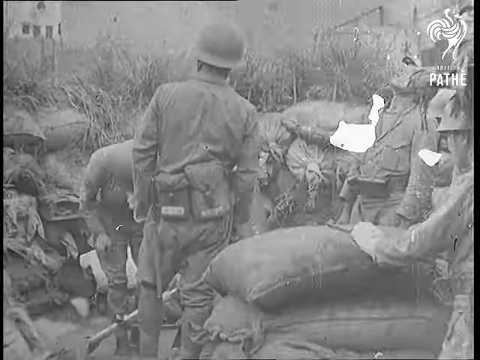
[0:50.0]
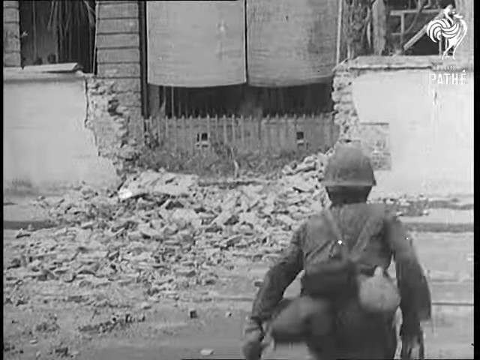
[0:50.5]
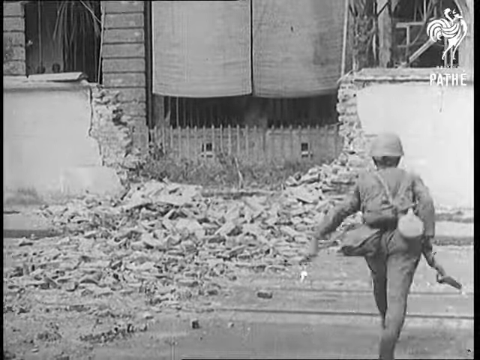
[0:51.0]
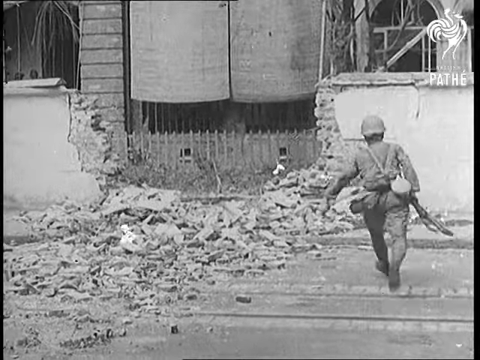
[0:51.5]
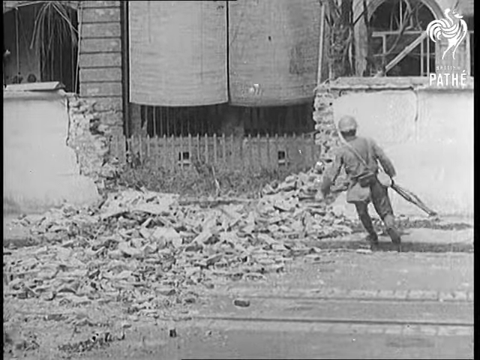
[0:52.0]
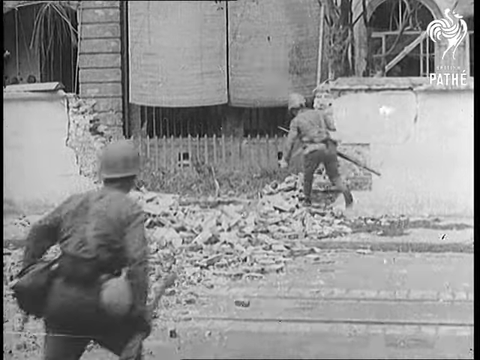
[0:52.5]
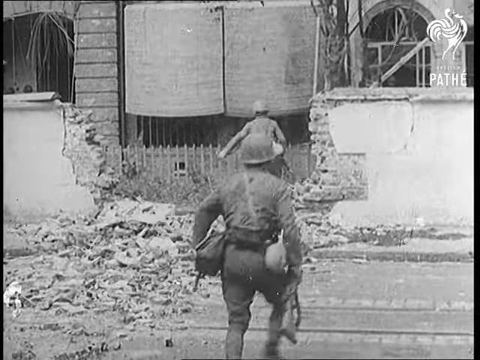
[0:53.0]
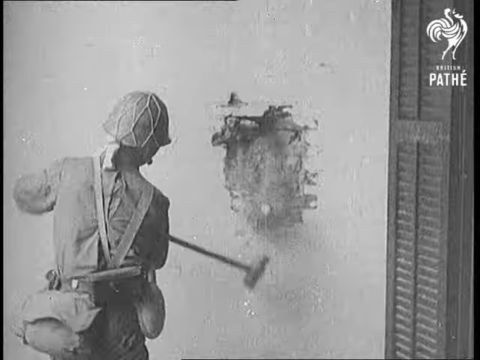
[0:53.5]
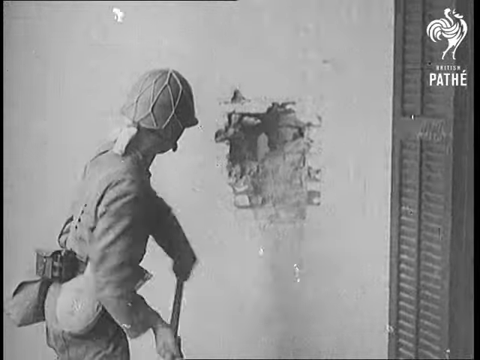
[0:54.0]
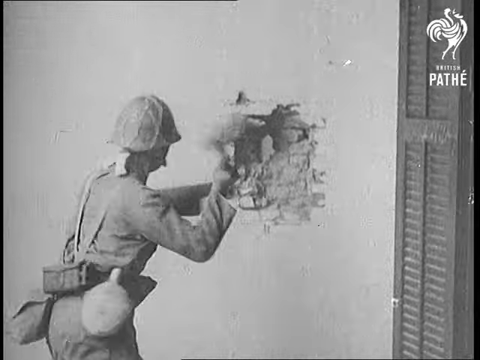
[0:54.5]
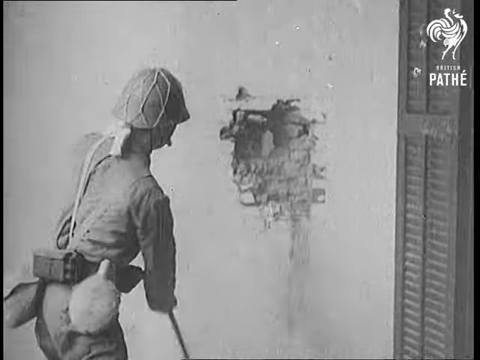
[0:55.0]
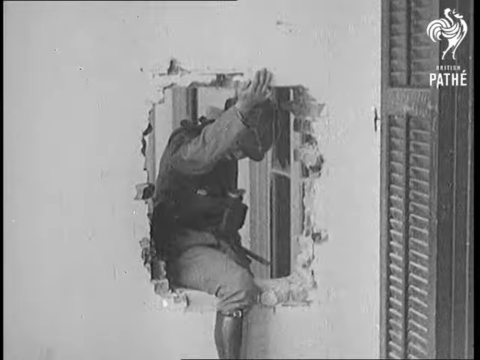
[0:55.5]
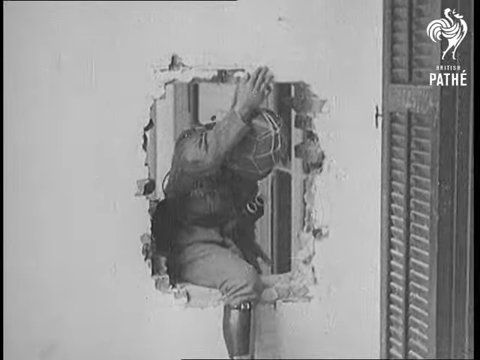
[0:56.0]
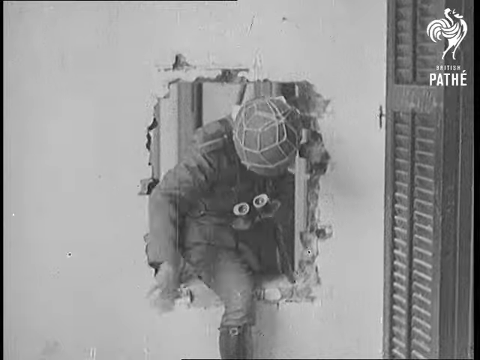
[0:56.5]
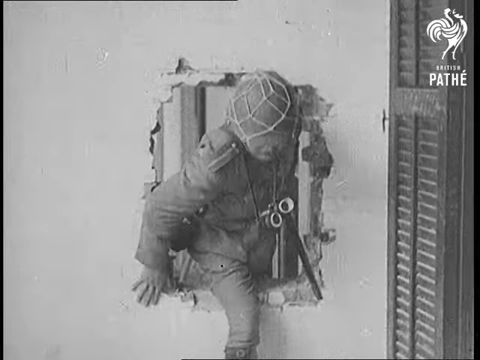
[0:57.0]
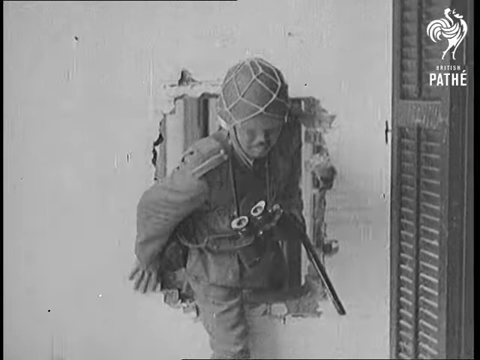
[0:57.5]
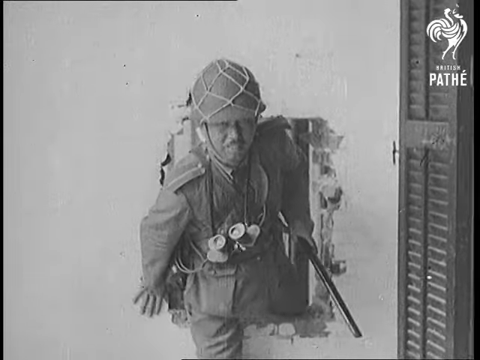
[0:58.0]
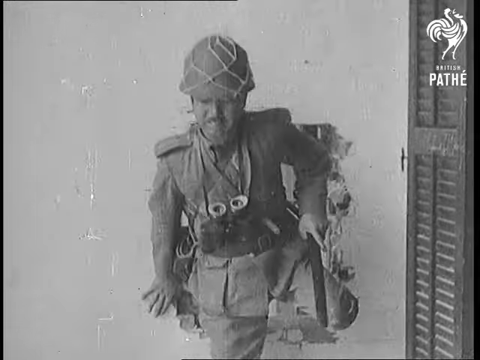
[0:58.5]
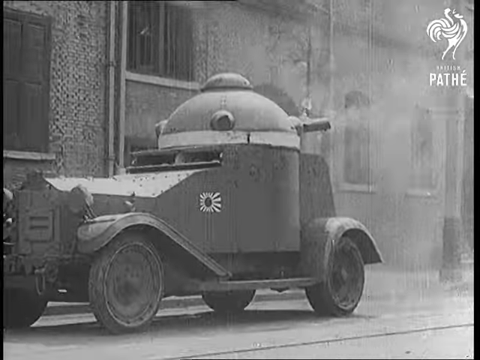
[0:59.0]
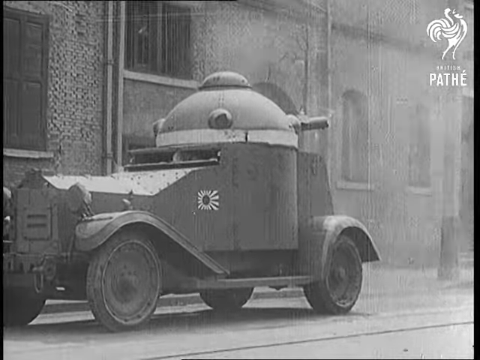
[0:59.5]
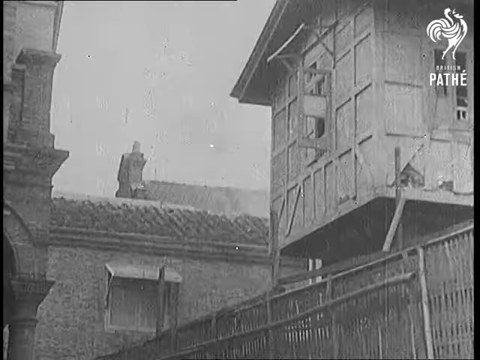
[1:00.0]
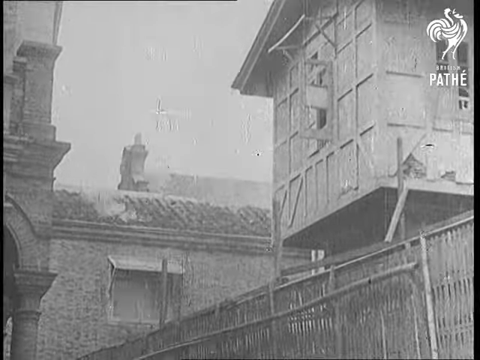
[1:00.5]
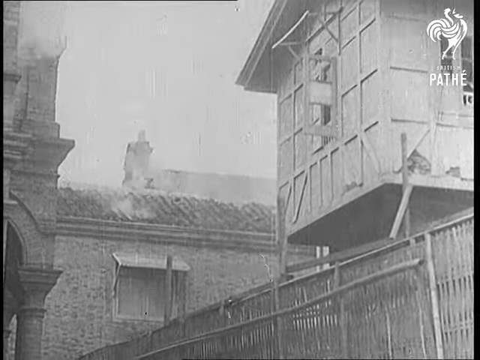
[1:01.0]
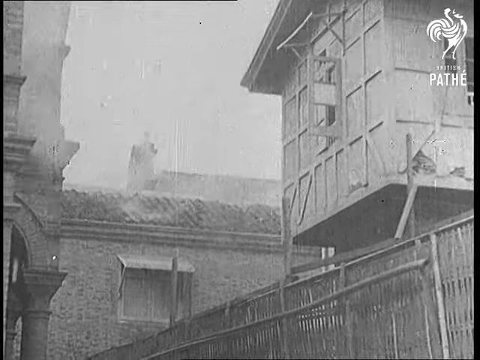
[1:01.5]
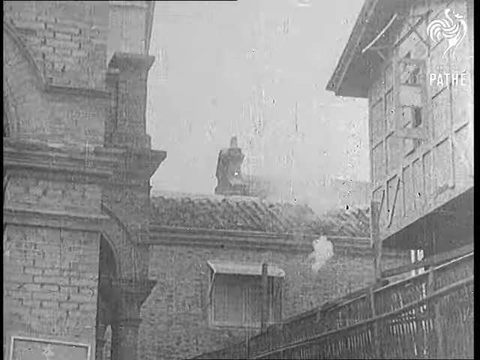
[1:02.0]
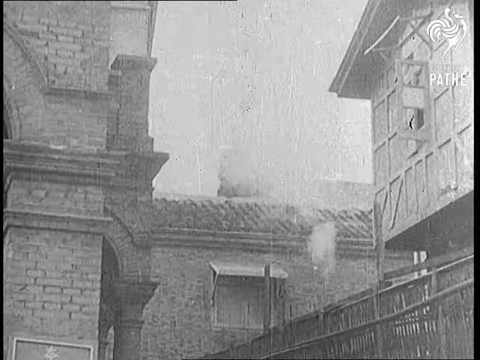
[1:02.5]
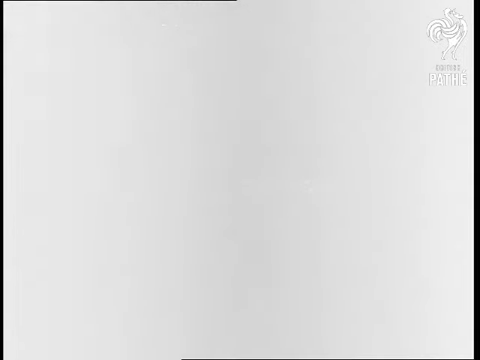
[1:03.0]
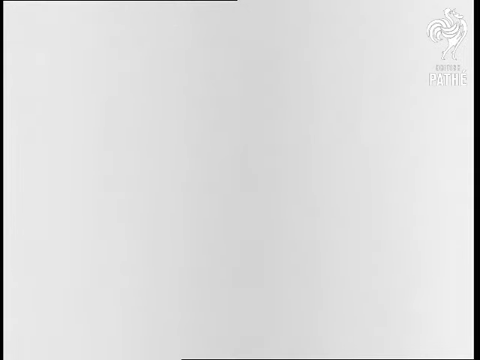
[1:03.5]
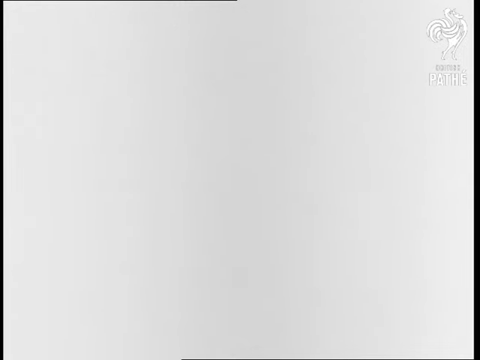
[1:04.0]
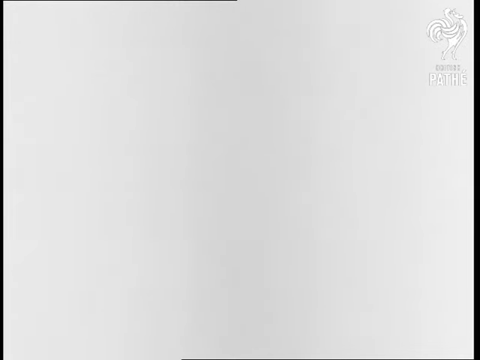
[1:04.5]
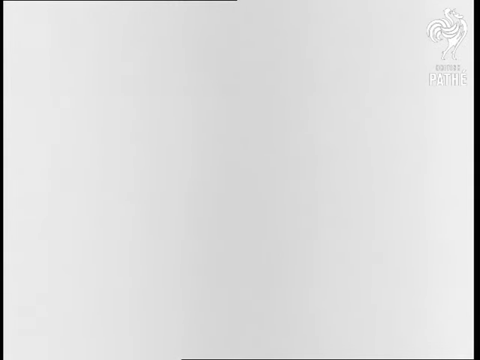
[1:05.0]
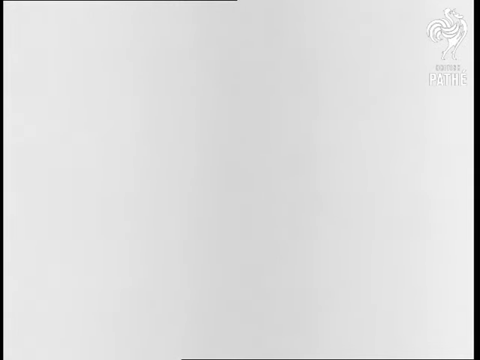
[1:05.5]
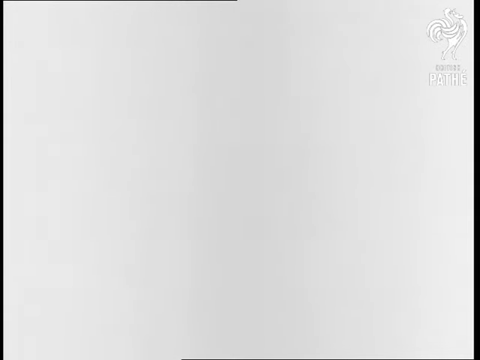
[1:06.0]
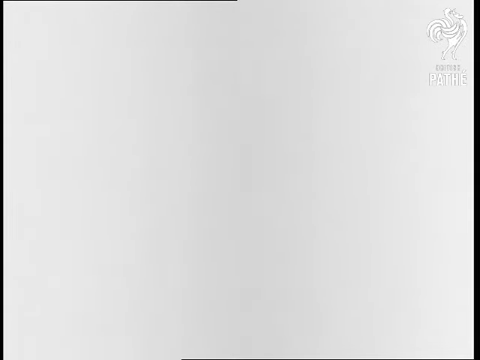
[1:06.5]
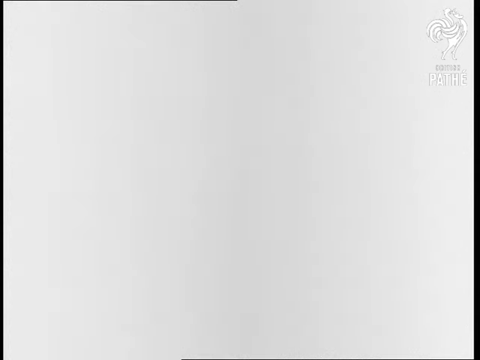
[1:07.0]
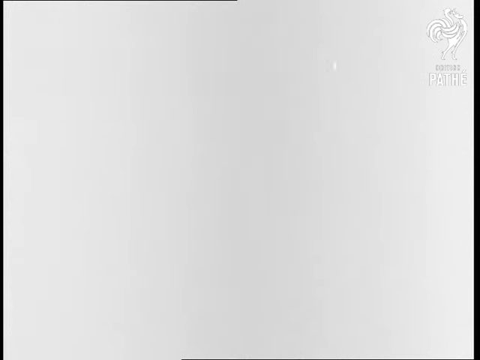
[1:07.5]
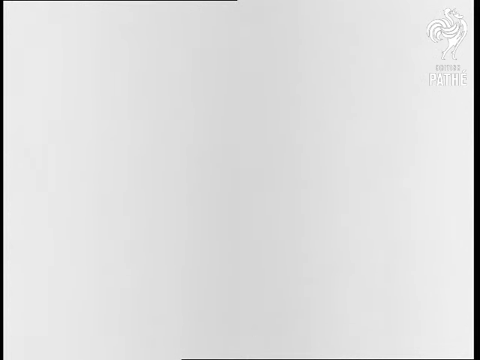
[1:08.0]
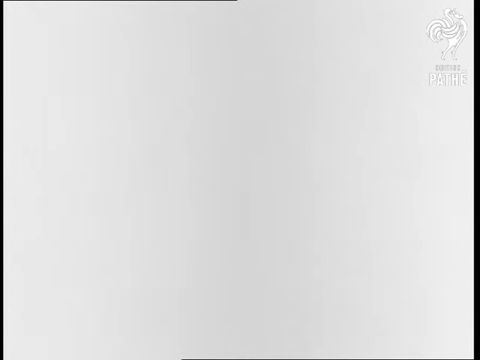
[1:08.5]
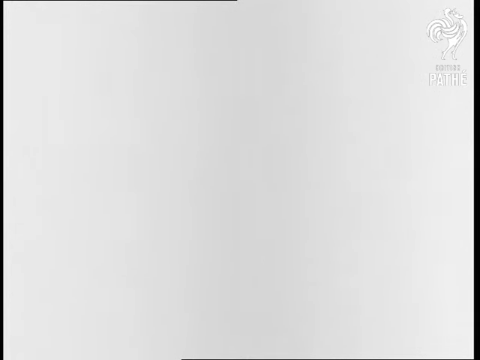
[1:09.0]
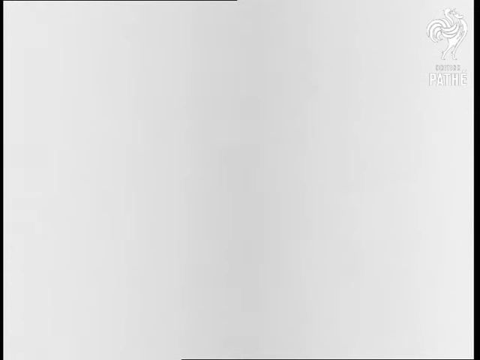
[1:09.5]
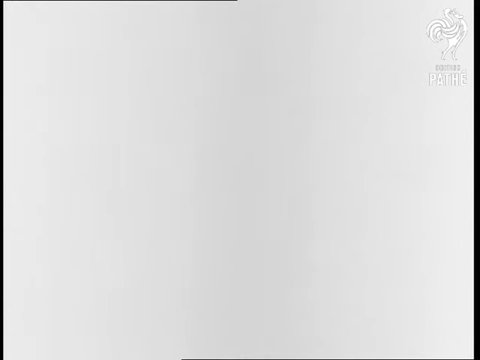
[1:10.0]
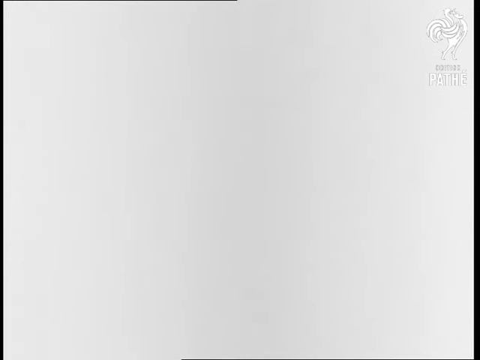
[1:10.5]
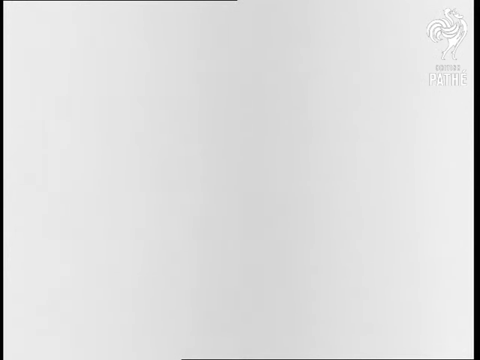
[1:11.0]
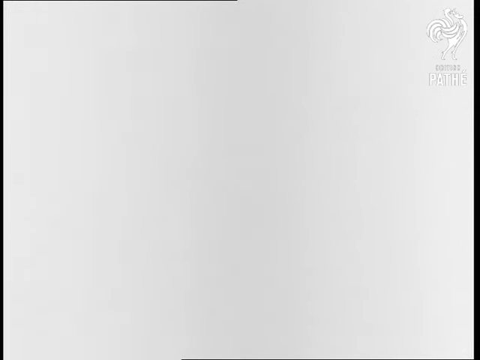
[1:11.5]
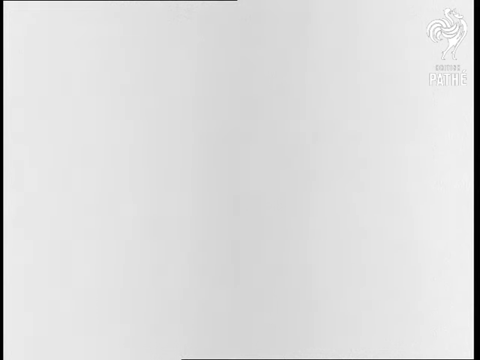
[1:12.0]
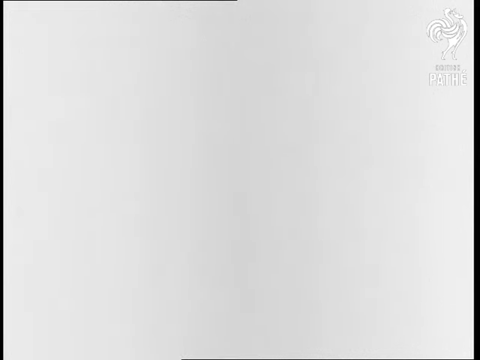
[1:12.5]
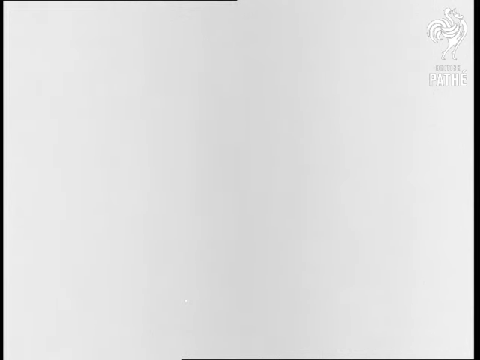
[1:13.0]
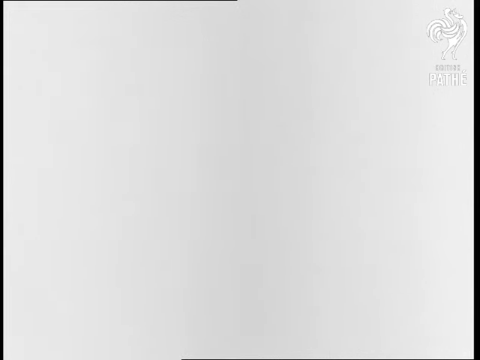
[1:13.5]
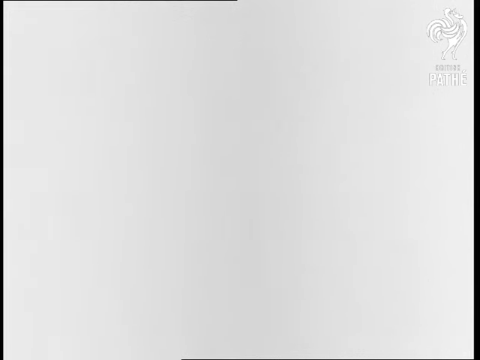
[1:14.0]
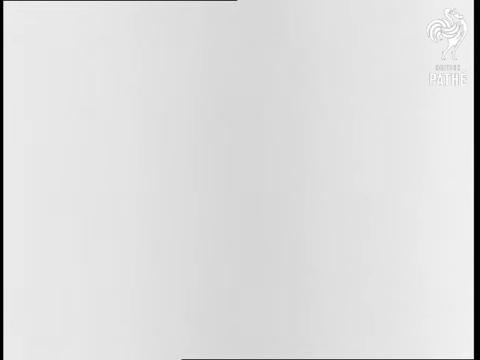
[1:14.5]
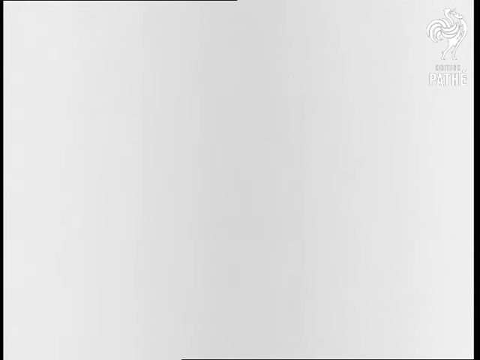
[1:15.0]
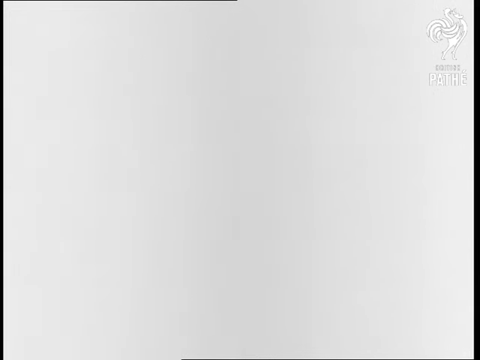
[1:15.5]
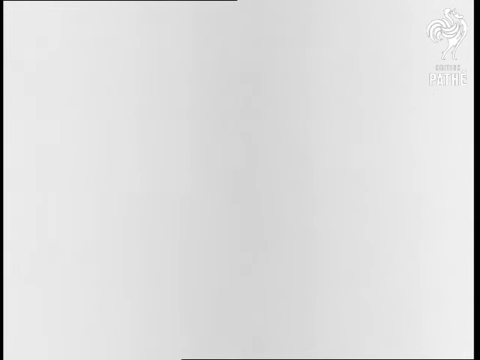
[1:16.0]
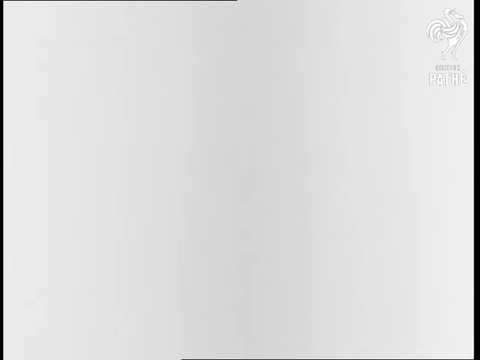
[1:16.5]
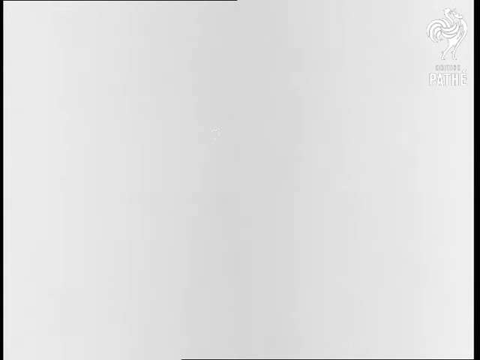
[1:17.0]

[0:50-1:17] Soldiers stack sandbags, then the scene switches very quickly to a single soldier with a gun and a backpack running toward a cylinder-type building made of two cylinders side by side. As he approaches, a second soldier follows him. Next, another soldier with a pickaxe breaks open a white wall in the side of a house, hitting it repeatedly until he creates a substantial hole, then crawls through the hole into the building. A paneled door, almost like a shutter-type door, is to his right, and his face is visible as he comes through: he has a slight grin and a mustache. The scene switches to one of the funny-looking tanks, a big cylindrical shop-vac-shaped body with pipes extending from the top that shoot, perched on an old-fashioned car. Then a rooftop scene appears to show a soldier on top of the roof shooting, with very decrepit buildings to his side. Finally the screen goes completely blank and stays white until the end.